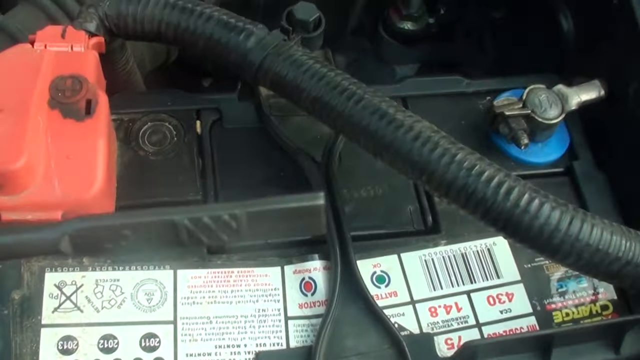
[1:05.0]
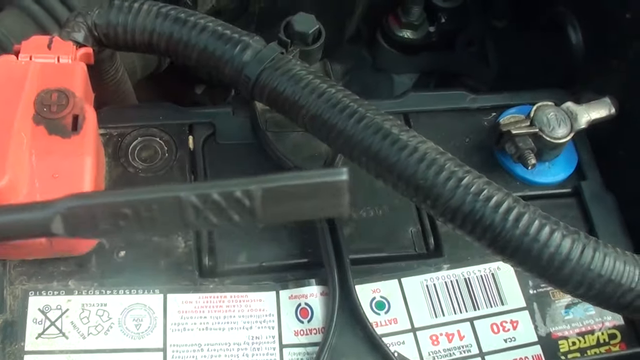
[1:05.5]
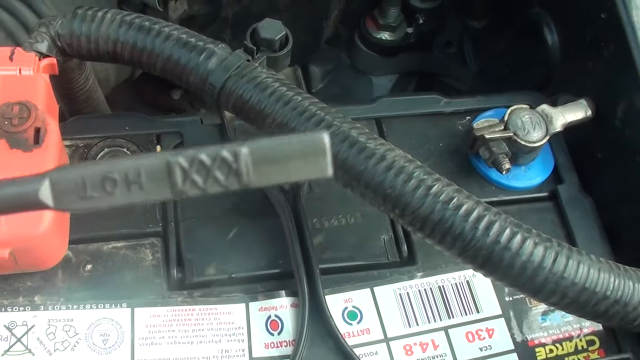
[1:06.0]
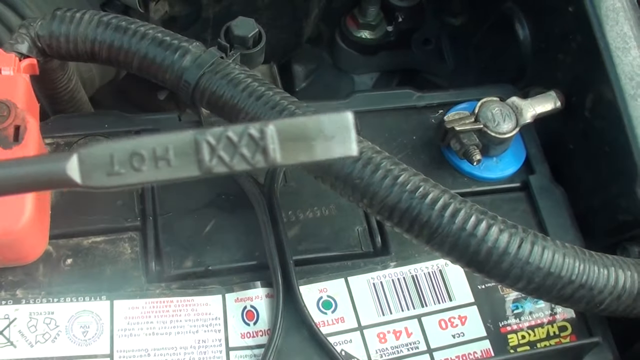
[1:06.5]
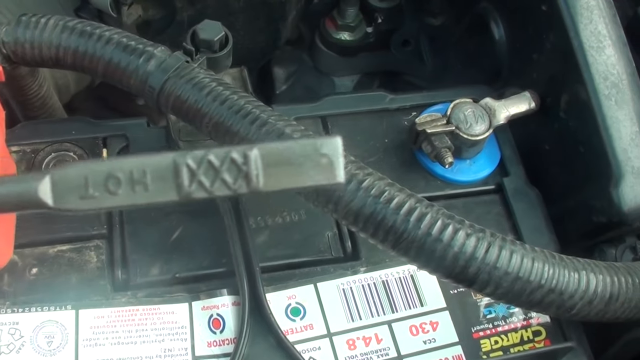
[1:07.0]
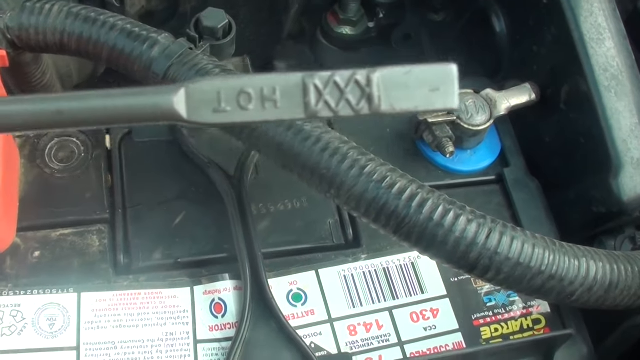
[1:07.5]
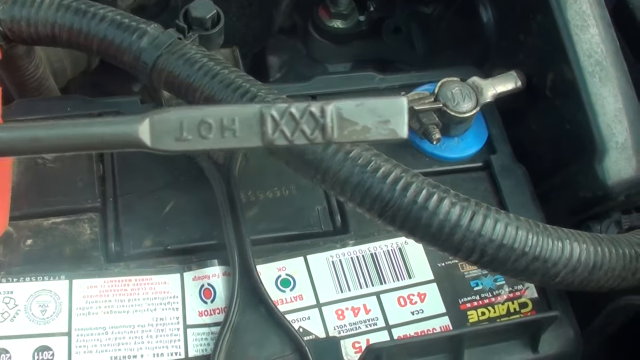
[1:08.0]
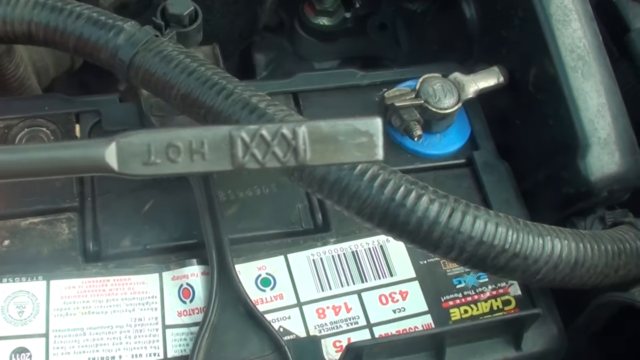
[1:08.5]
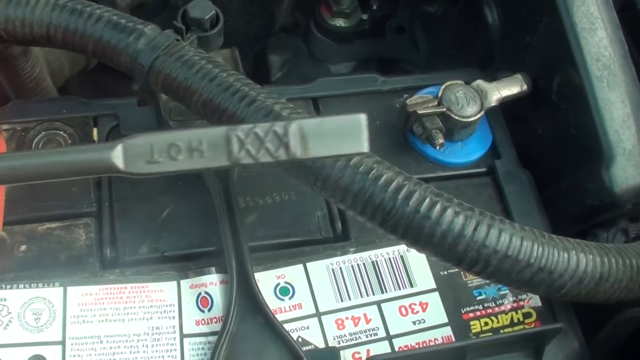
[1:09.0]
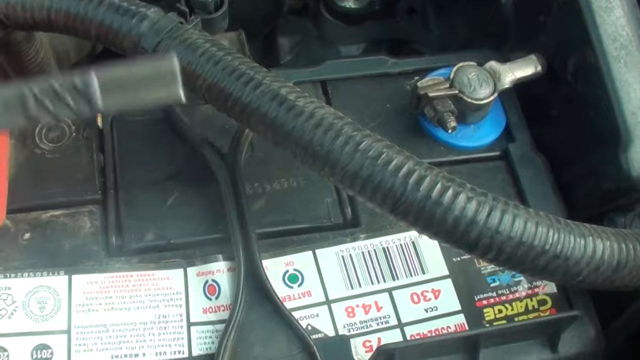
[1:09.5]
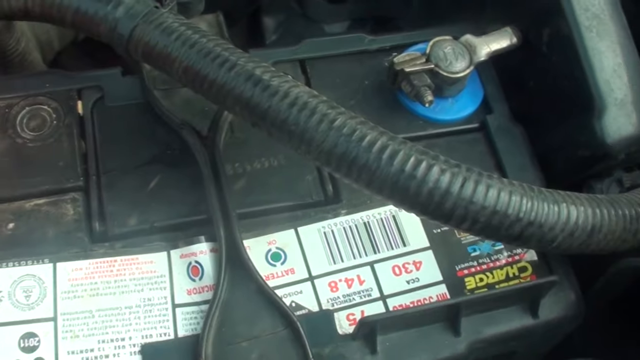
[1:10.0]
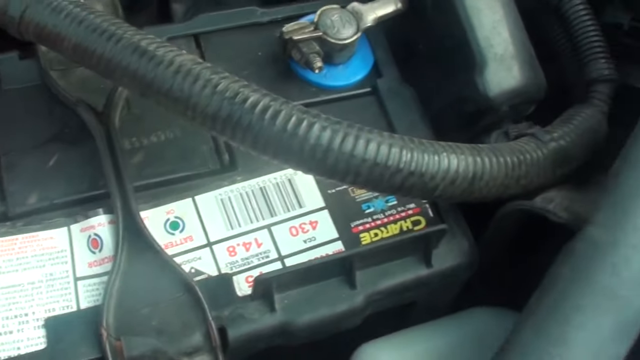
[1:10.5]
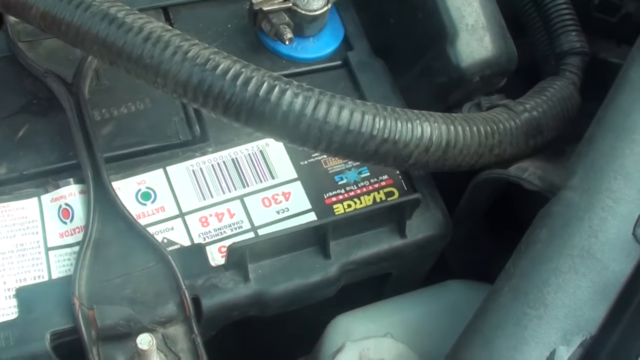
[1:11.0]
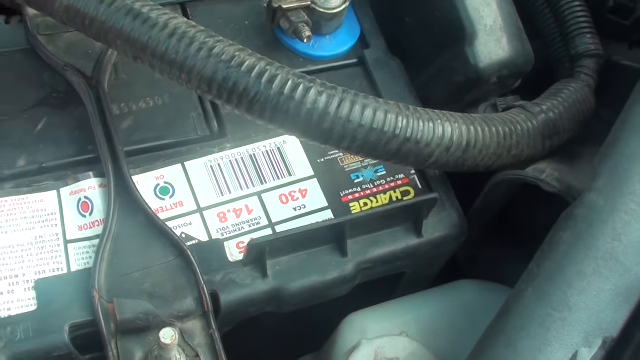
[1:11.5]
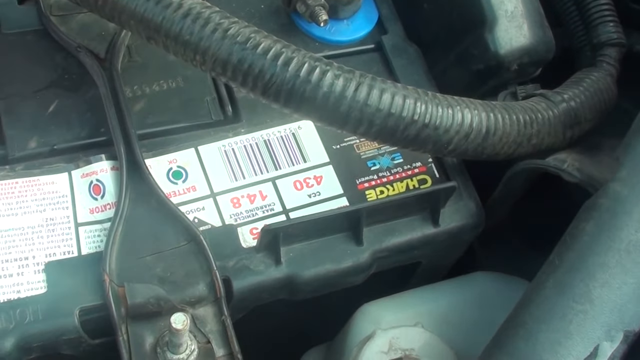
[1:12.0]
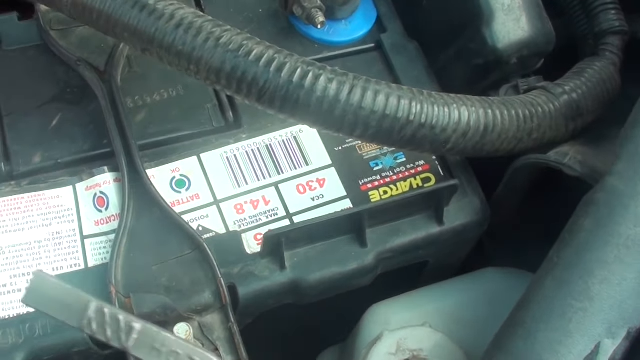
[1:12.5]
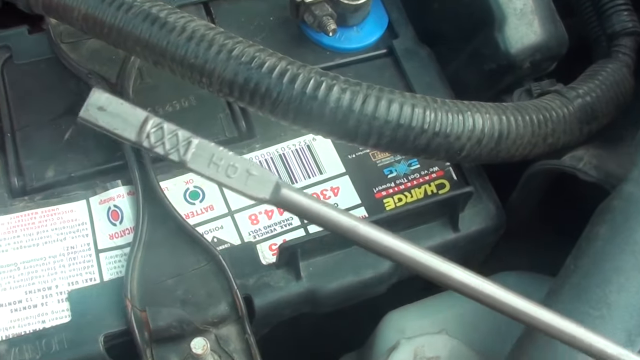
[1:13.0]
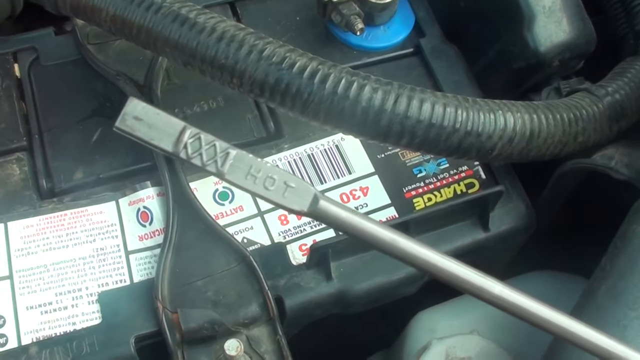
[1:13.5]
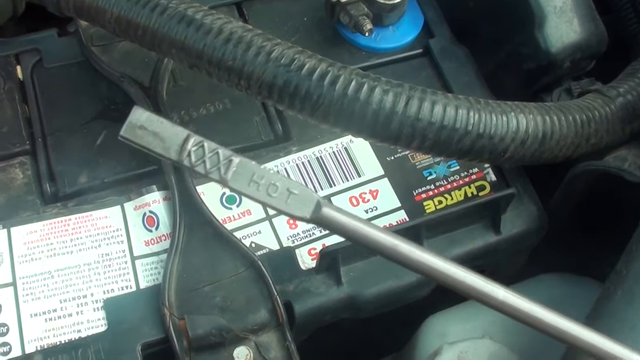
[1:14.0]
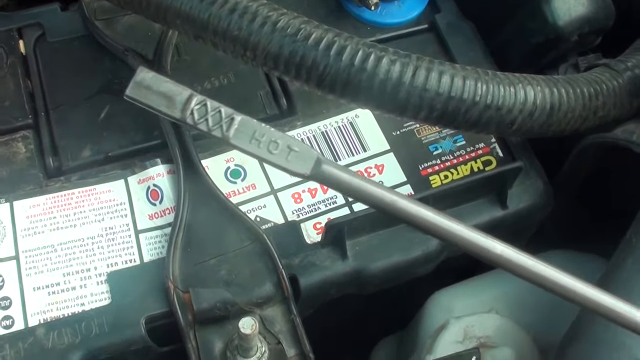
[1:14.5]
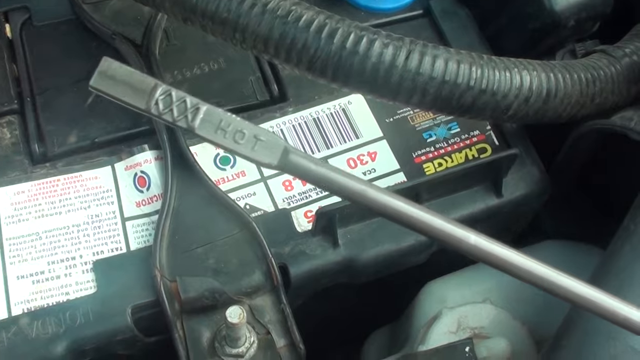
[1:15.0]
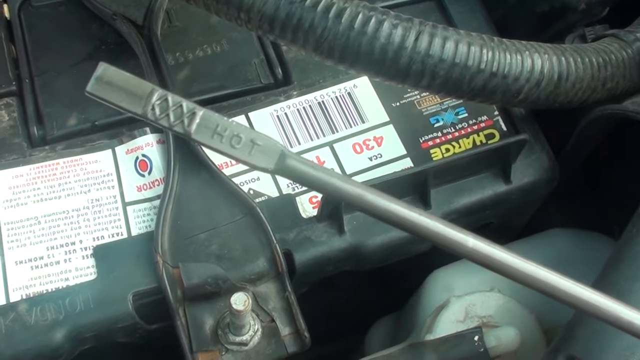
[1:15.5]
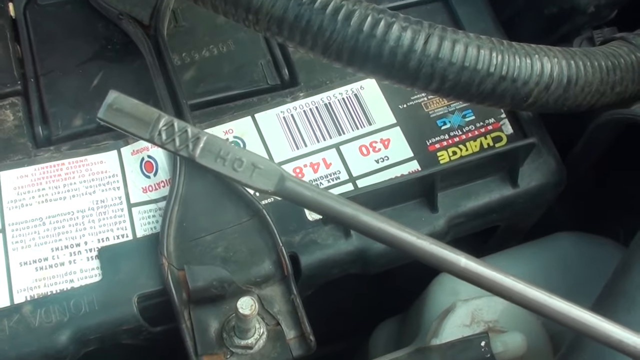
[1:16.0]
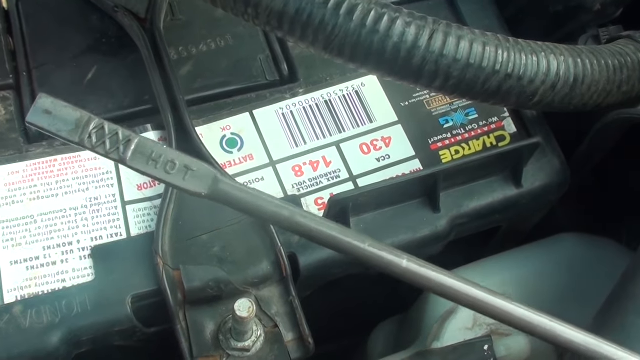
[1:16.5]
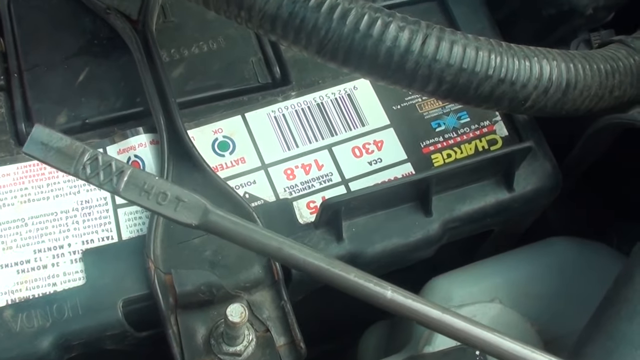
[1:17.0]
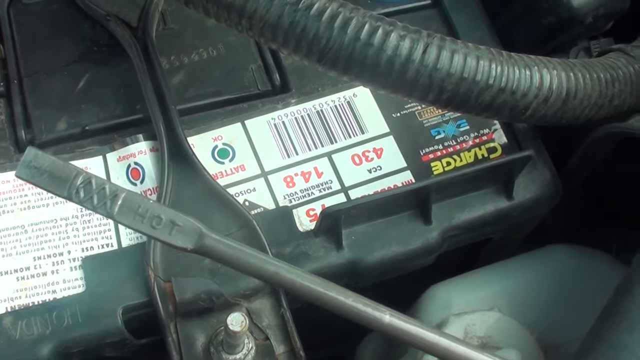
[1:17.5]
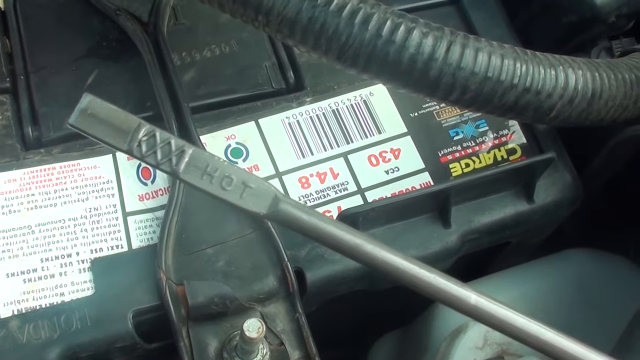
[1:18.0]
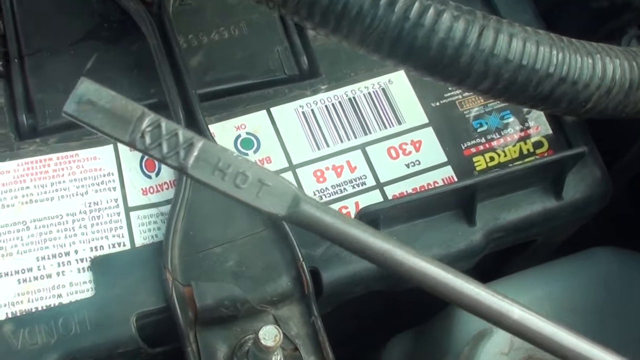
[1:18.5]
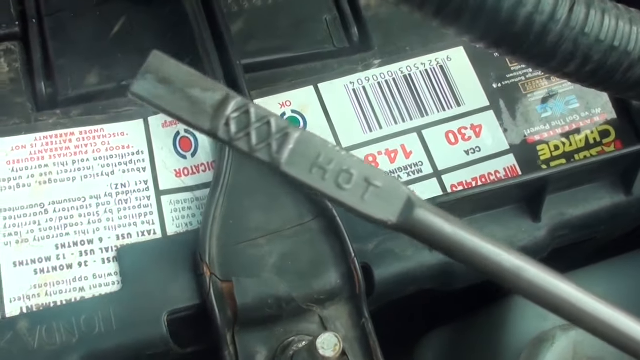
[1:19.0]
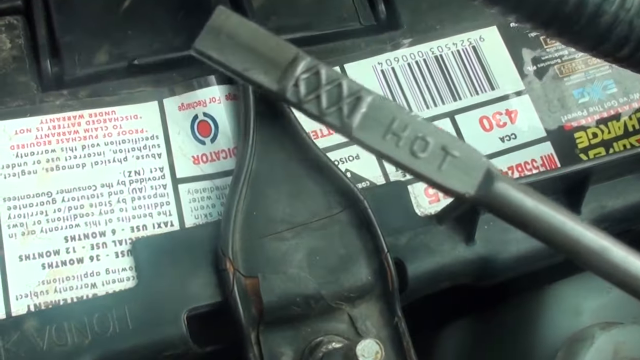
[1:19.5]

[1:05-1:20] An oil gauge reader is held up to the camera, with the area under the hood of a Honda Civic 2007 behind it. The battery is right behind the oil gauge, with a black tube connected to it that has a red cover on the end where it attaches to the battery's connector. On the right side of the battery is a silver connector with a blue circle at its bottom. The oil on the measuring stick reflects light off the edge of the stick, showing that oil is there. The word "HOT" is written on the stick, along with some X's and grid lines. The stick moves back and forth and then disappears from view. The camera goes down and focuses on the battery again, and then the measuring stick appears again from the bottom right corner, showing how much oil is in the car; it looks like there is enough oil.